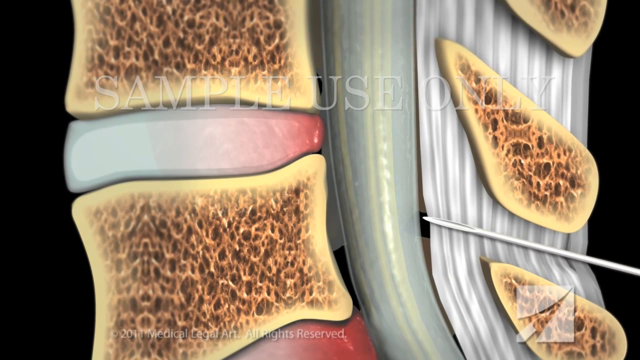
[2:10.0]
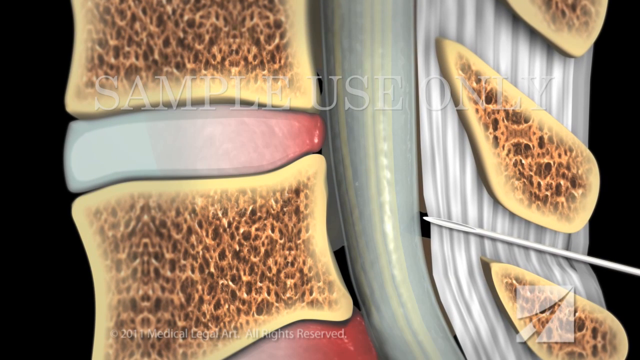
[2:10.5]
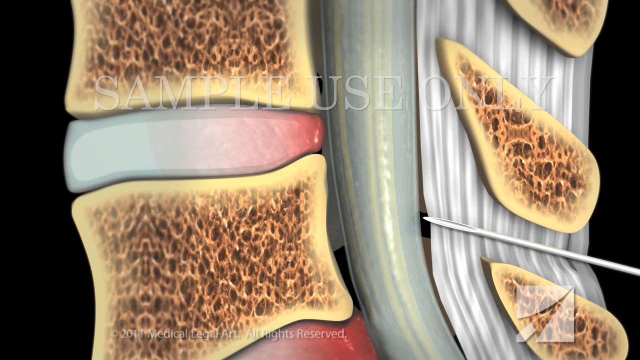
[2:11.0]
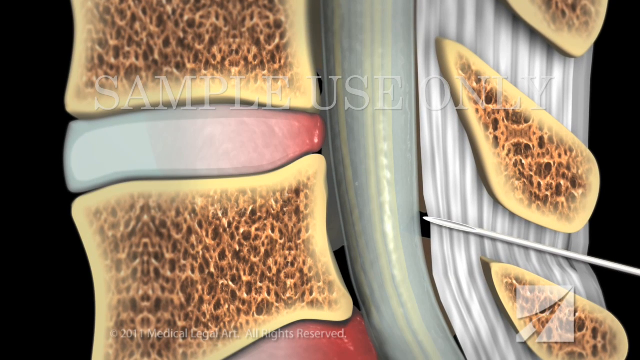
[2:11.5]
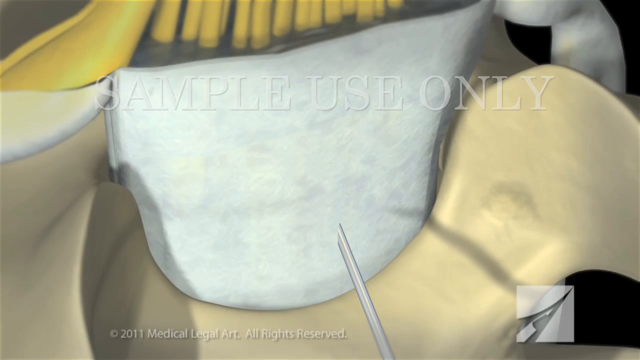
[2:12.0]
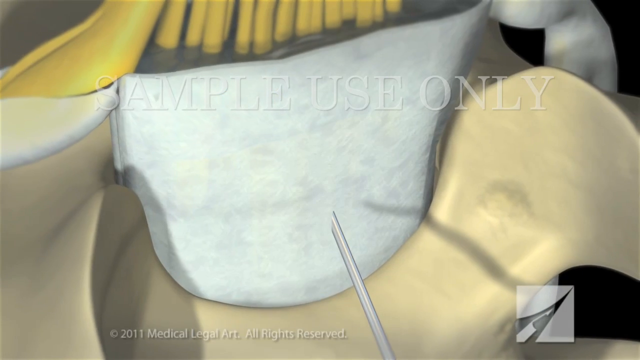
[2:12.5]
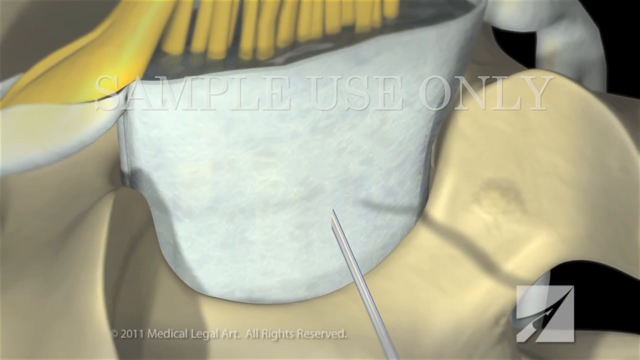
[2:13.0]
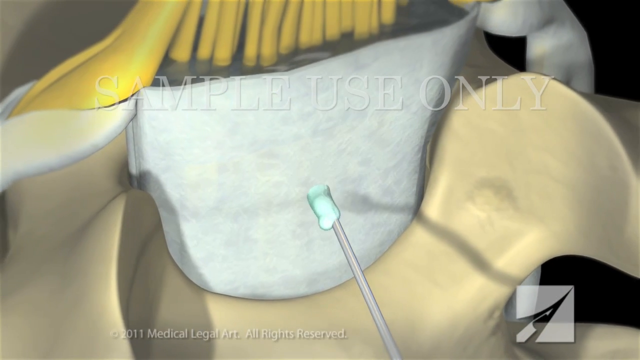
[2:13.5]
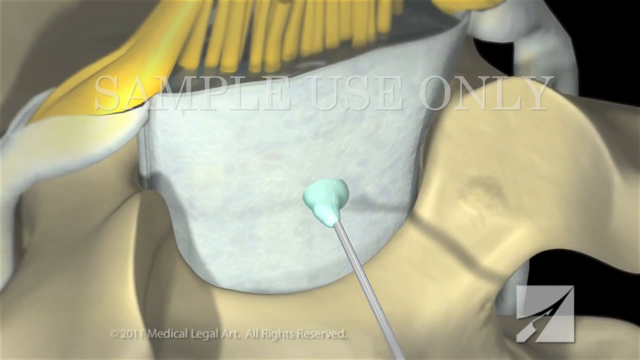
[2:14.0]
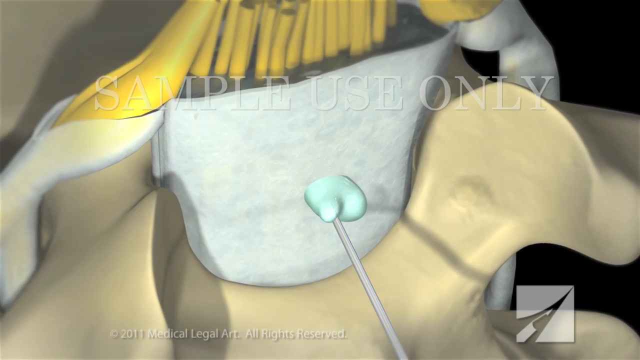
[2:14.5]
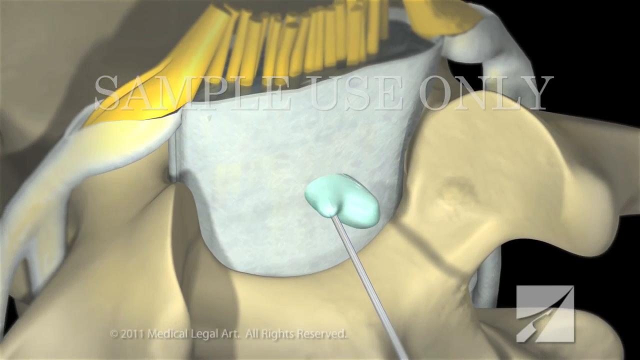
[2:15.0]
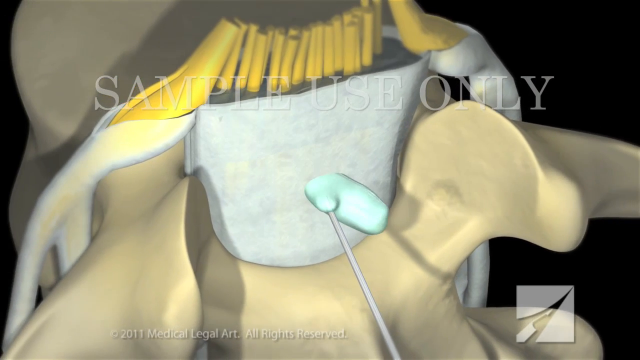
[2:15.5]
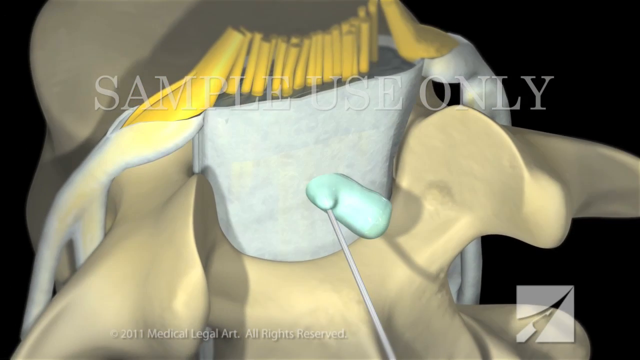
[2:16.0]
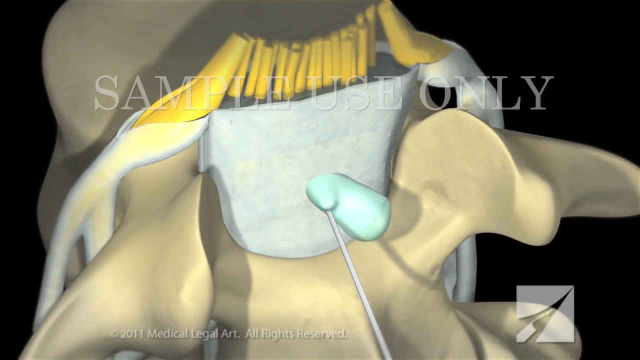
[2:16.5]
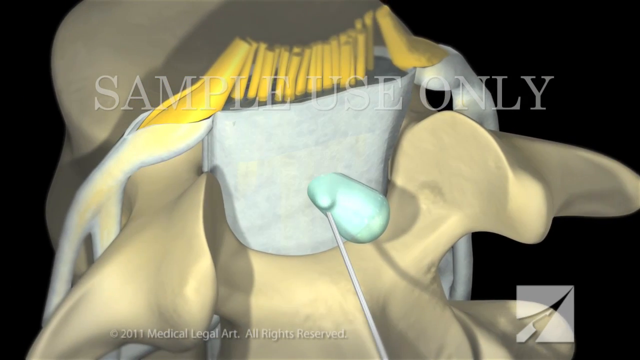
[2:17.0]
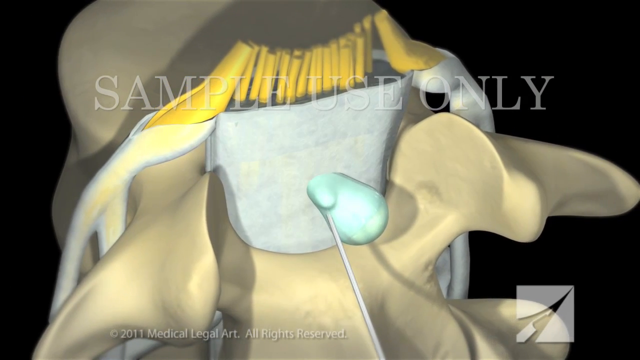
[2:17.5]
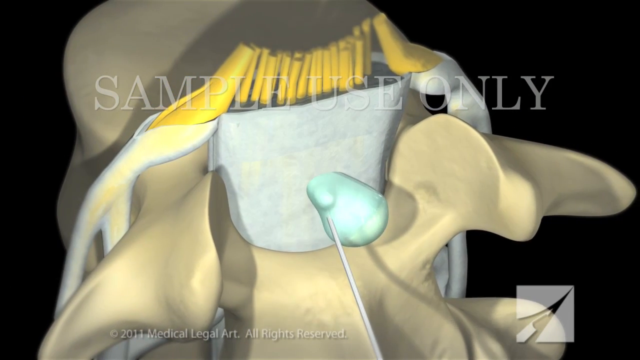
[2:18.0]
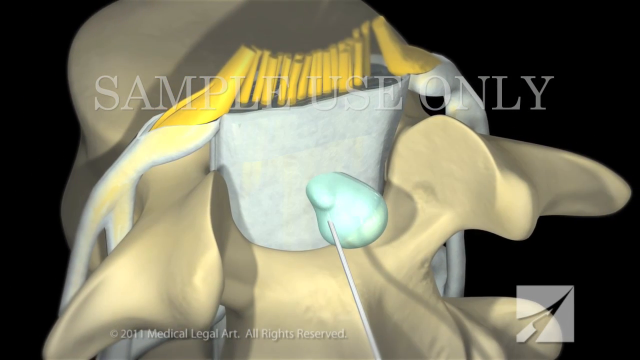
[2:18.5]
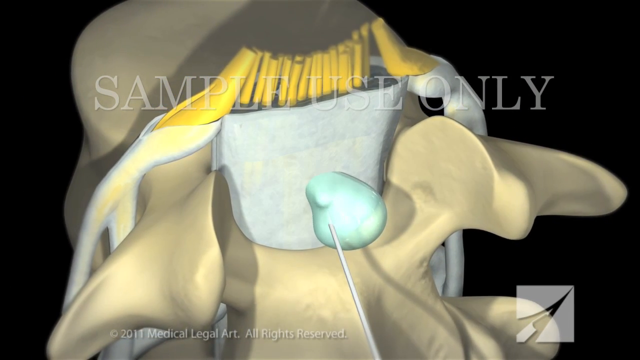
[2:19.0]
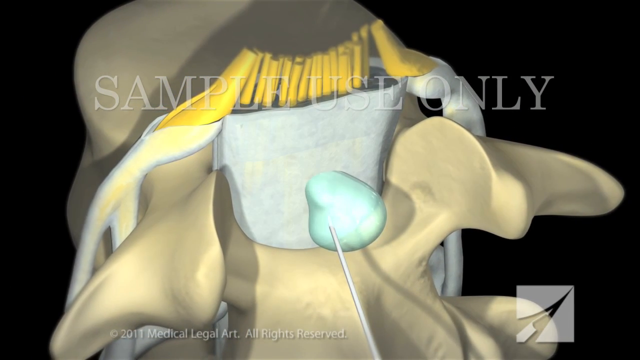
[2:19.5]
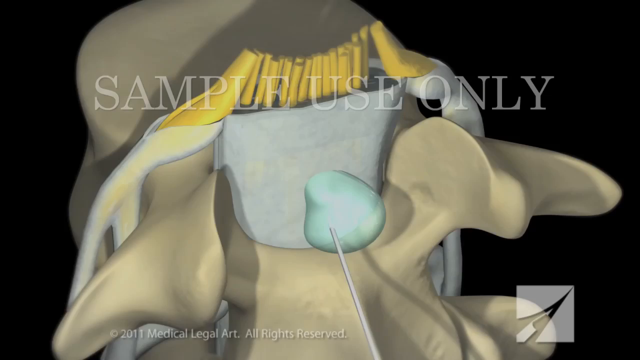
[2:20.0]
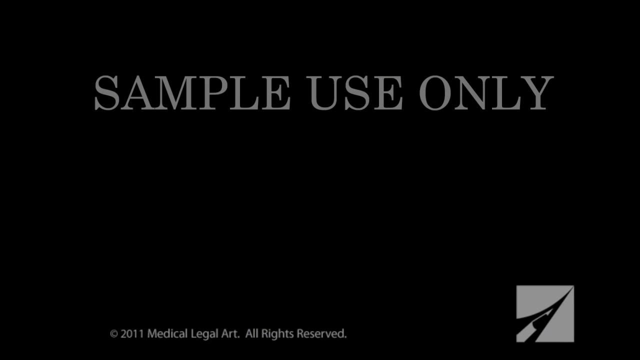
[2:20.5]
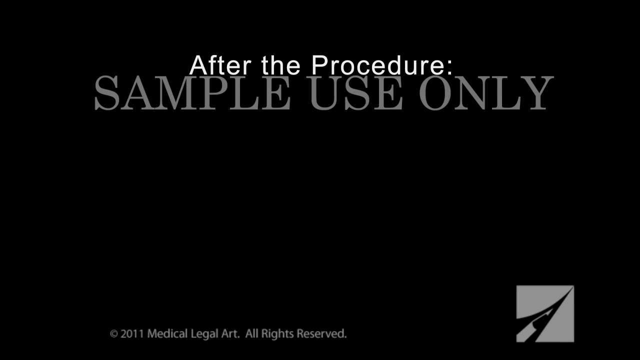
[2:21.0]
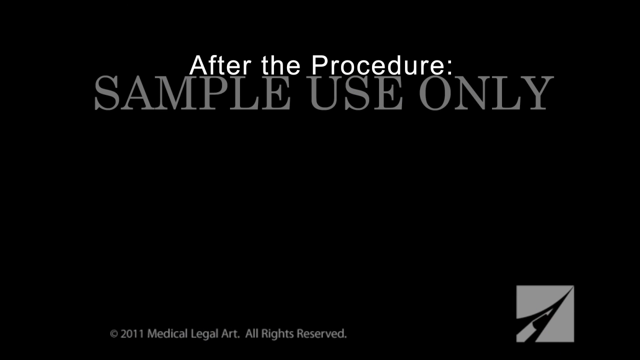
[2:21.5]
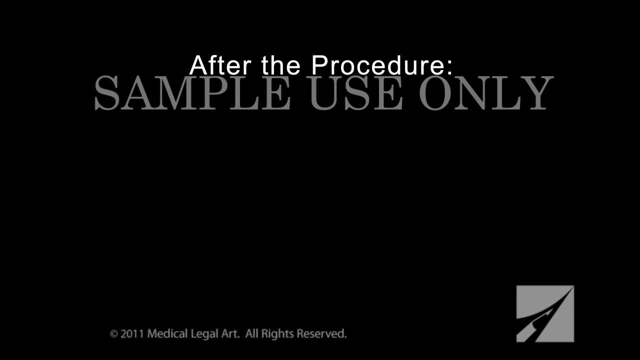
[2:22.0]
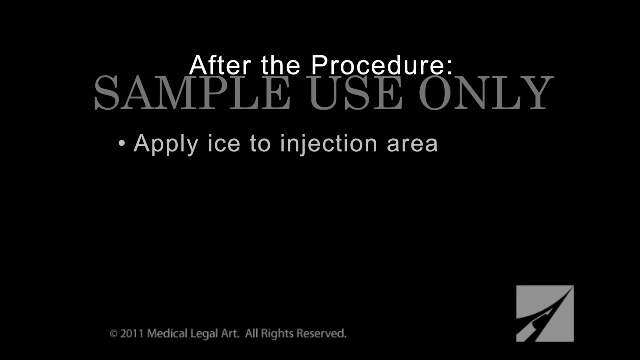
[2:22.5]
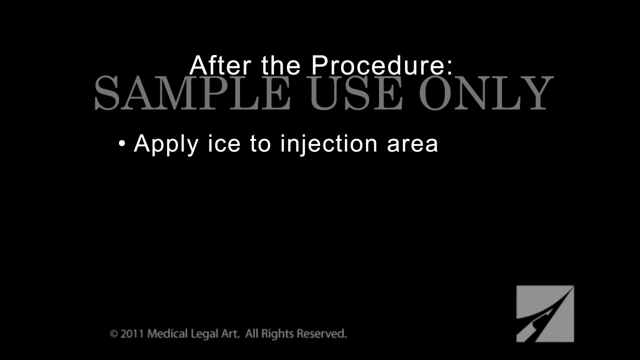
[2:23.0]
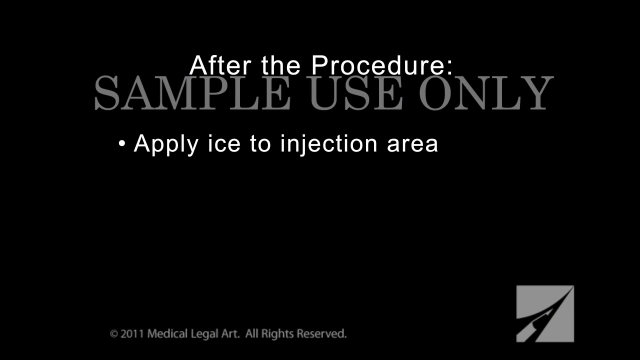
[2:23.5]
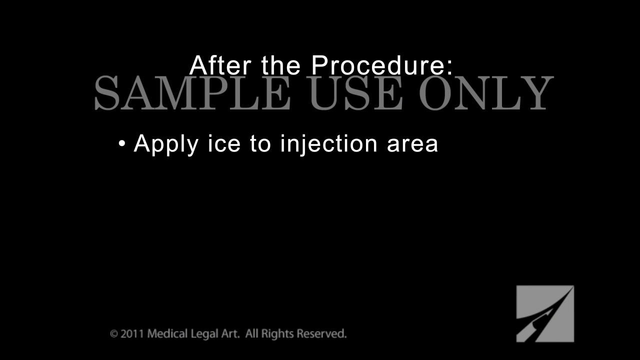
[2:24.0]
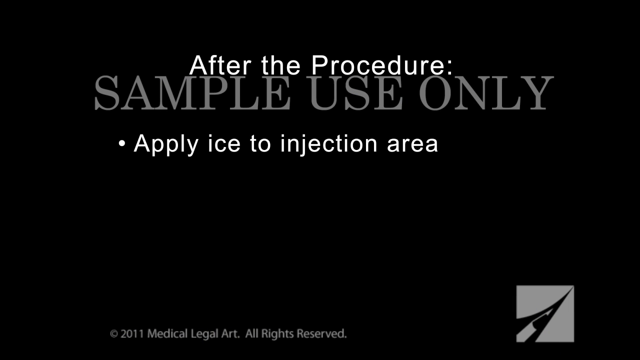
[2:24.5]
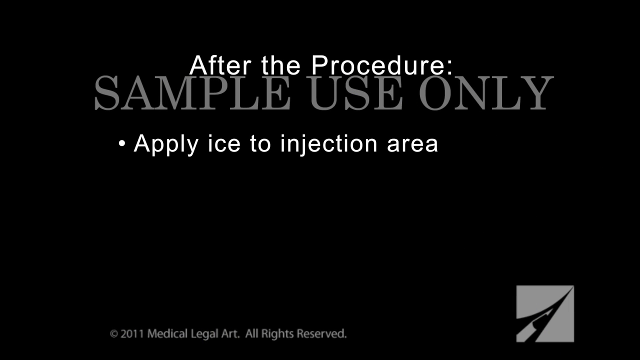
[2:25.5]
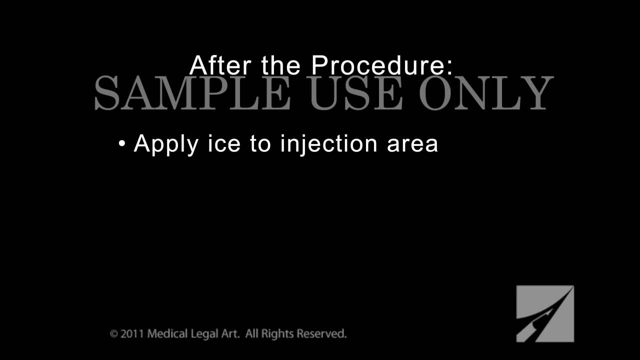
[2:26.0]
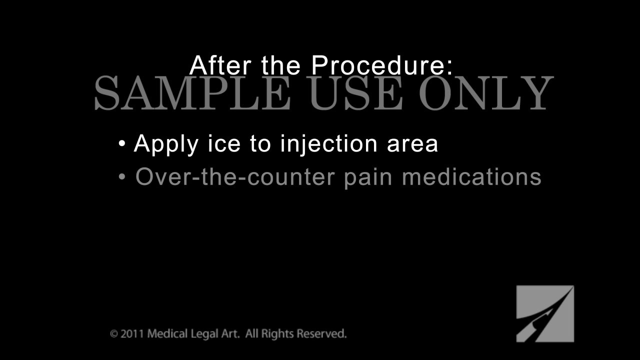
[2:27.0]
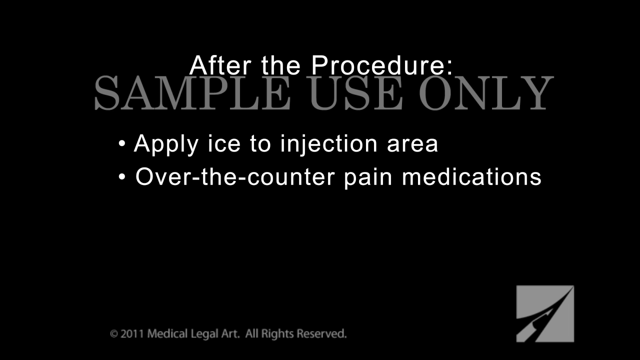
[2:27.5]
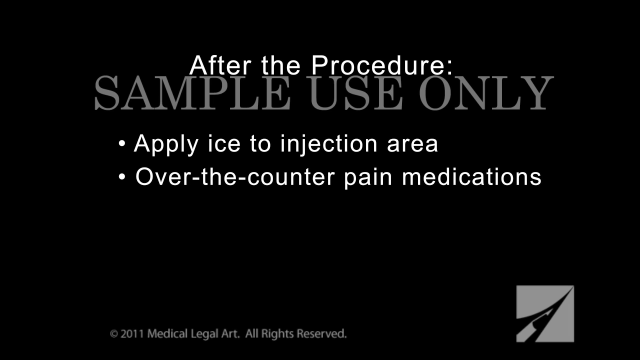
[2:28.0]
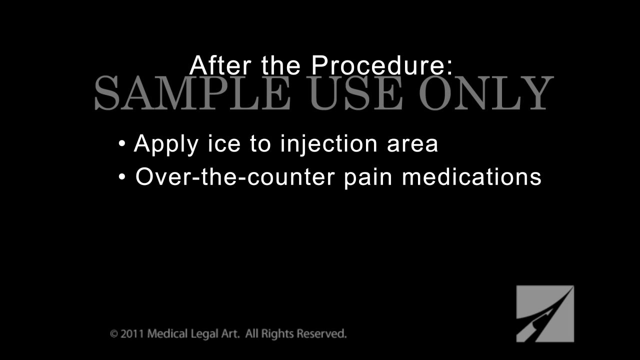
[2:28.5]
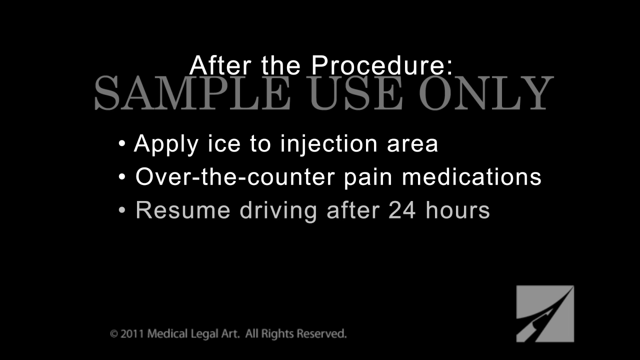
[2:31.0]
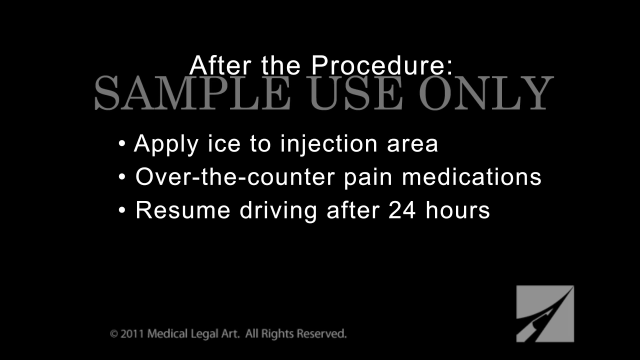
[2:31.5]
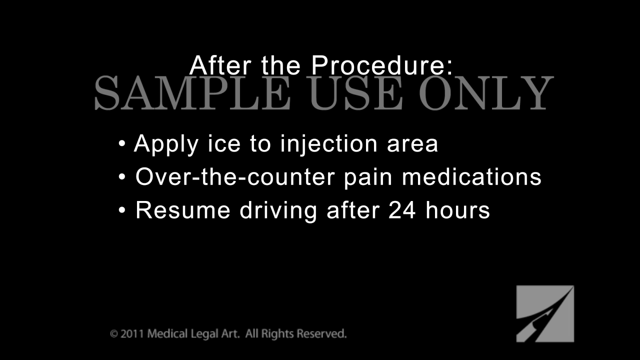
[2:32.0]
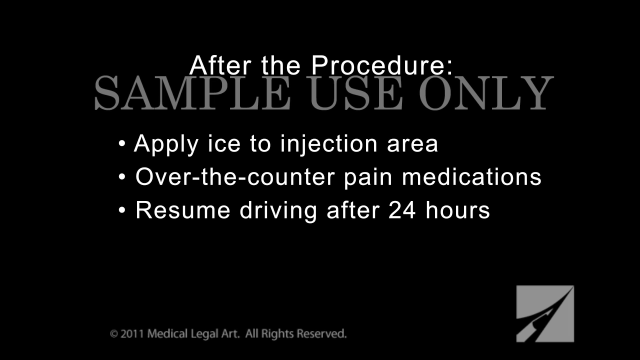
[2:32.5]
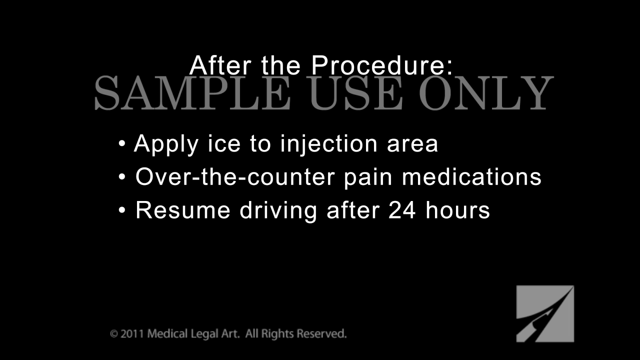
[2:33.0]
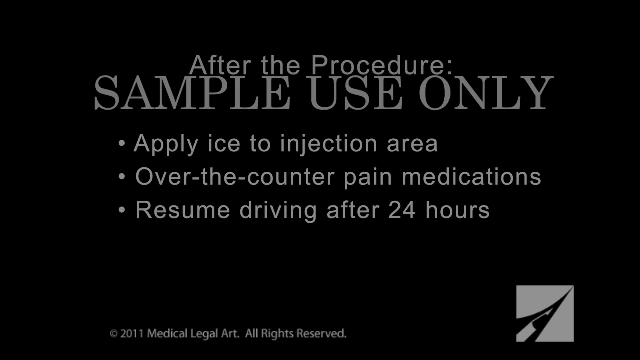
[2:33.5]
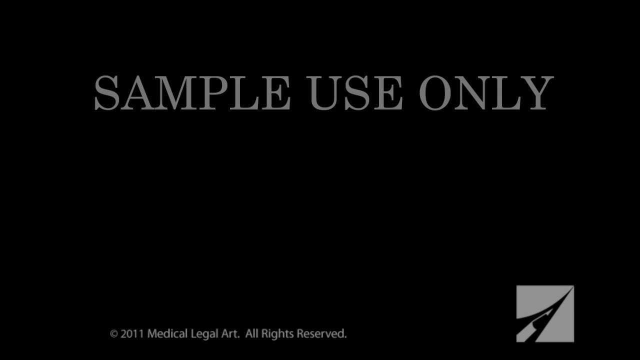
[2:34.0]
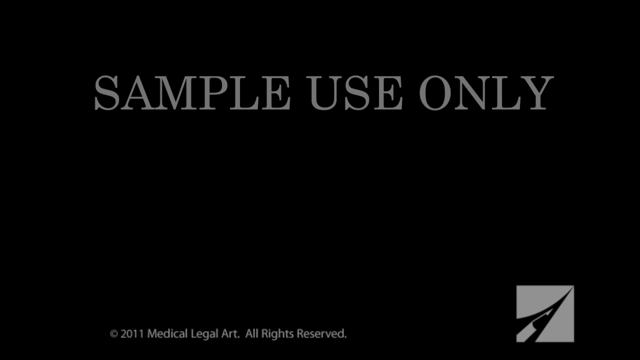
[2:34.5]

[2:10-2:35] A surgical needle comes in from the lower right corner, going through the skin between the vertebrae to the nerve column of the spine. It reaches toward the center, then goes between the vertebrae to inject medication into the nerves. The scene cuts to a cross-section of the nerves, which are yellow and point upward vertically, encased in a white sheathing that has been trimmed away to reveal them. The background is black, with a light gray watermark across the top center reading "sample use only." The injection from the needle into the vertebral column is light blue; it comes out rather quickly into the tissue and becomes a circular area. The view pans to a black screen showing the "sample use only" watermark in gray lettering, with white lettering reading "after the procedure." A small square emblem is in the lower right corner. In the center are bullet points: "apply ice to the injection area," beneath it "over-the-counter pain medications," followed by "resume driving after 24 hours."